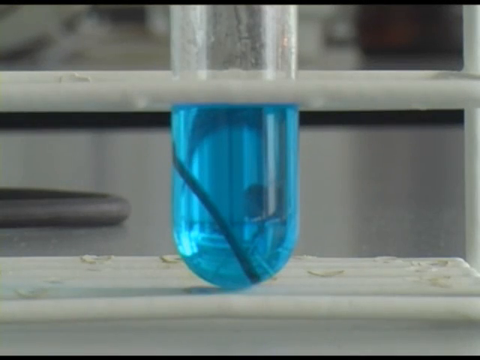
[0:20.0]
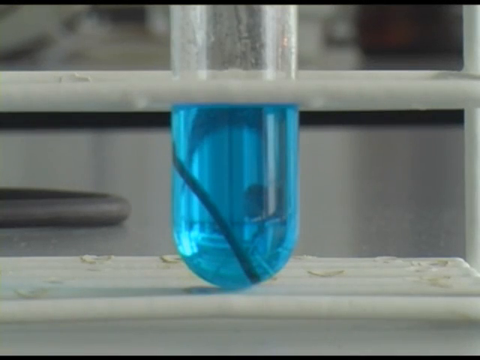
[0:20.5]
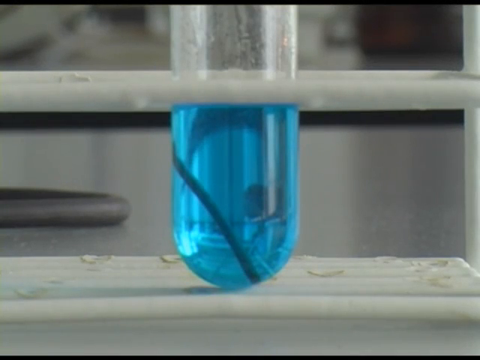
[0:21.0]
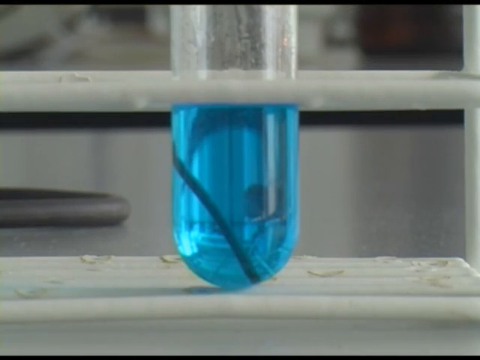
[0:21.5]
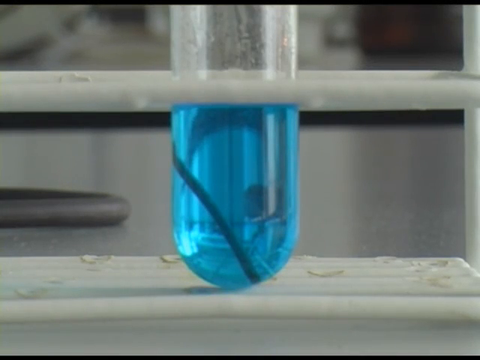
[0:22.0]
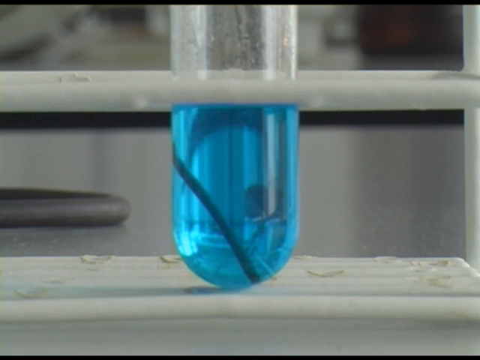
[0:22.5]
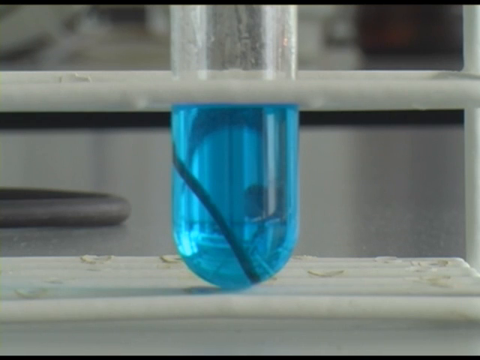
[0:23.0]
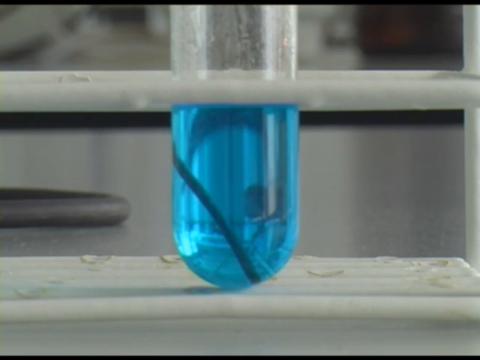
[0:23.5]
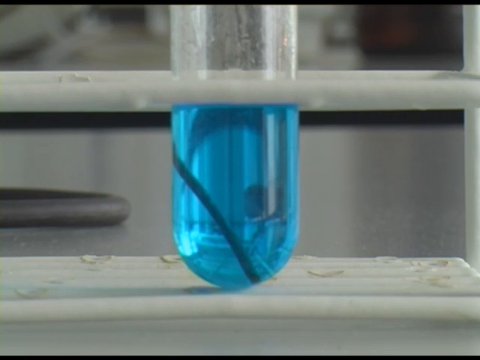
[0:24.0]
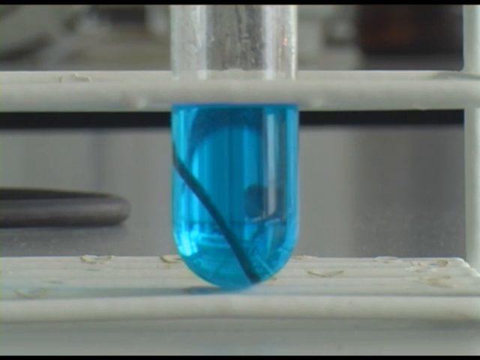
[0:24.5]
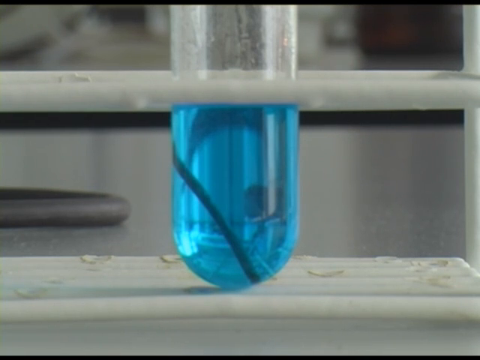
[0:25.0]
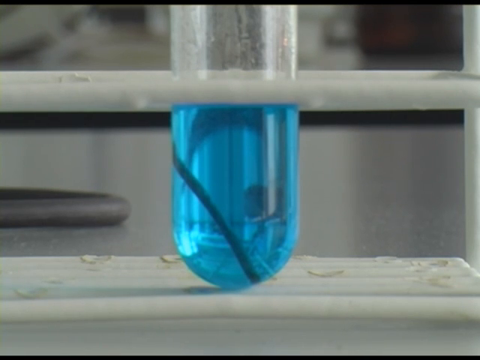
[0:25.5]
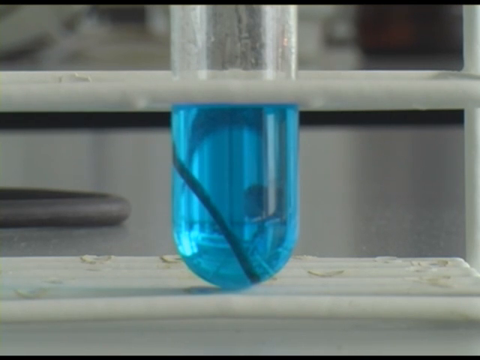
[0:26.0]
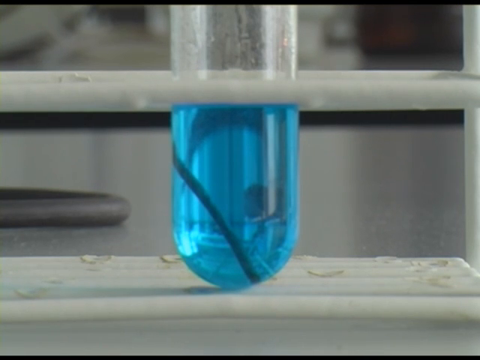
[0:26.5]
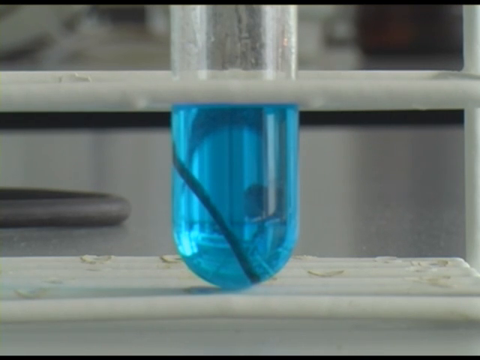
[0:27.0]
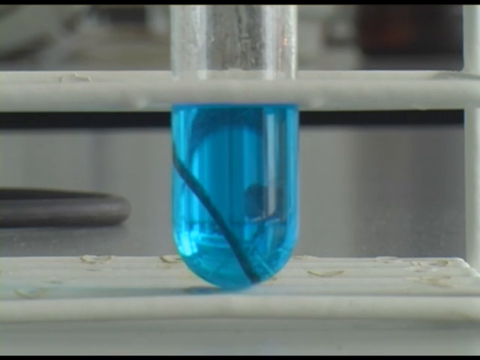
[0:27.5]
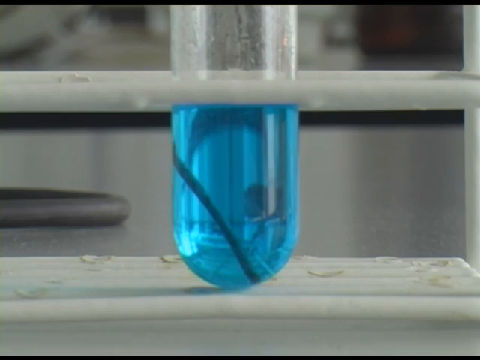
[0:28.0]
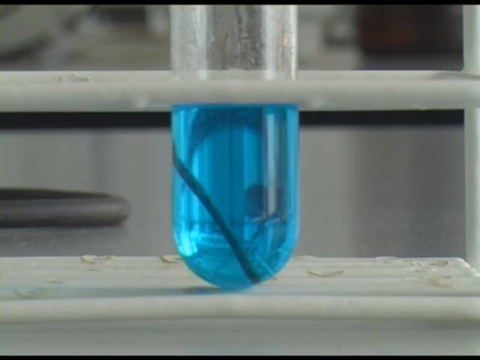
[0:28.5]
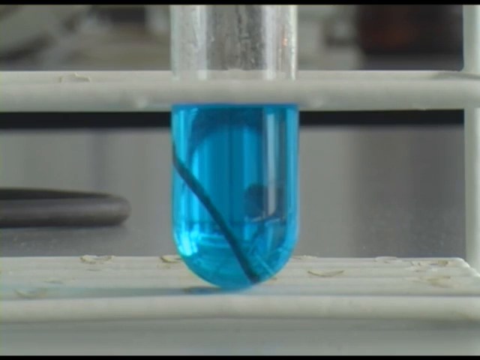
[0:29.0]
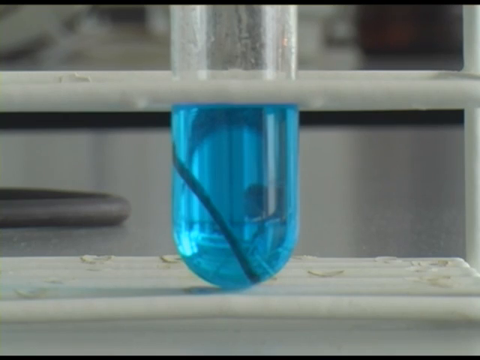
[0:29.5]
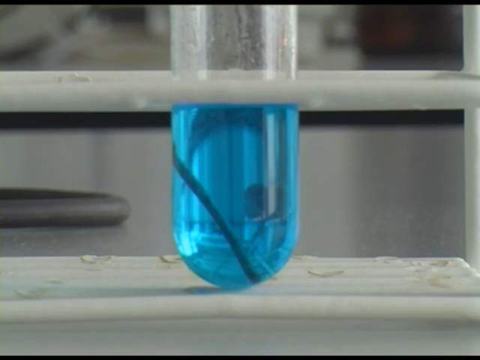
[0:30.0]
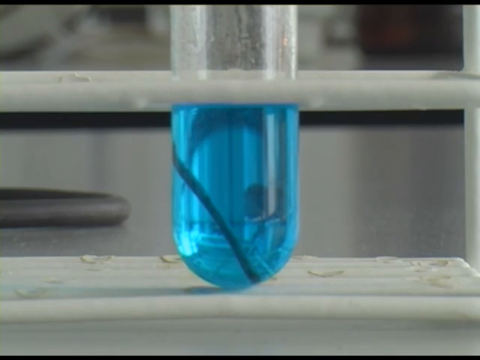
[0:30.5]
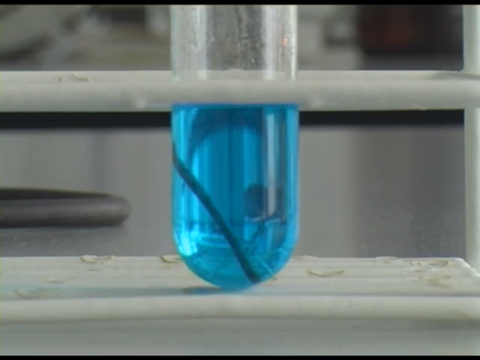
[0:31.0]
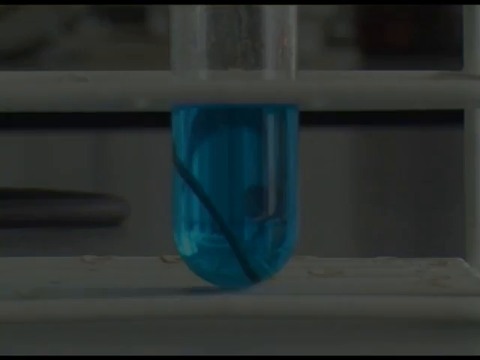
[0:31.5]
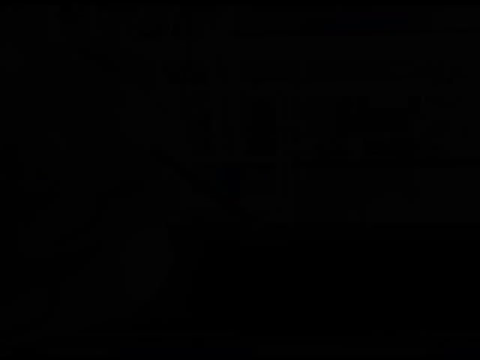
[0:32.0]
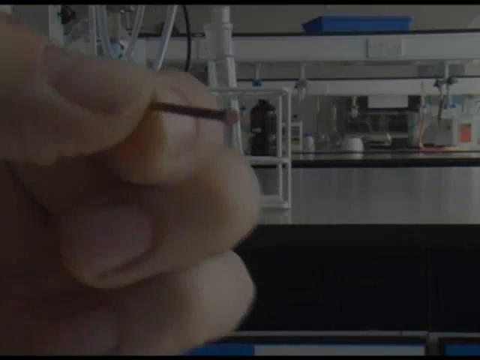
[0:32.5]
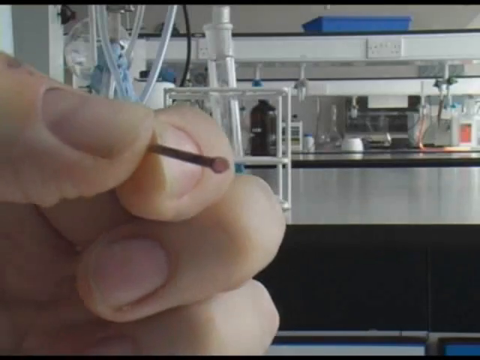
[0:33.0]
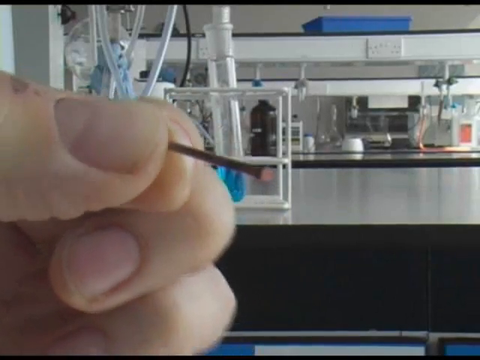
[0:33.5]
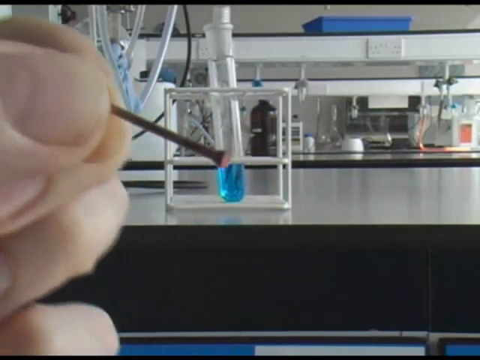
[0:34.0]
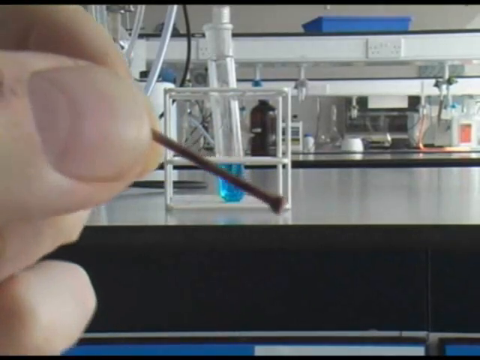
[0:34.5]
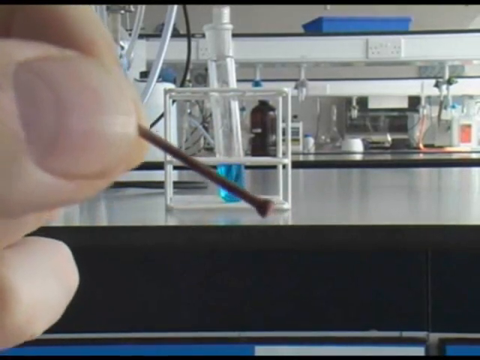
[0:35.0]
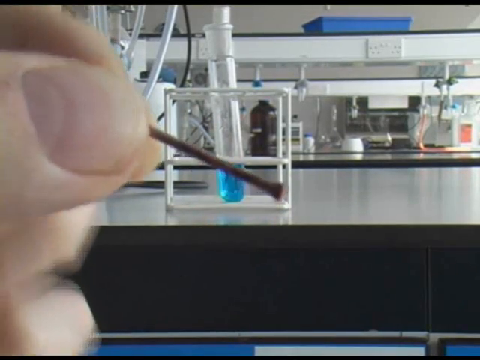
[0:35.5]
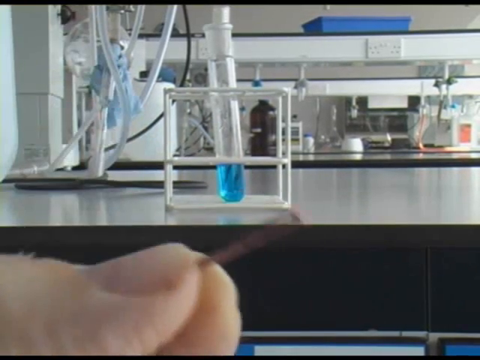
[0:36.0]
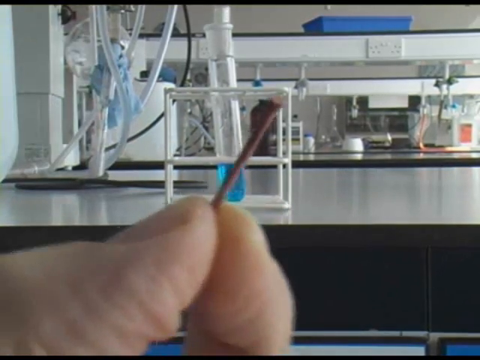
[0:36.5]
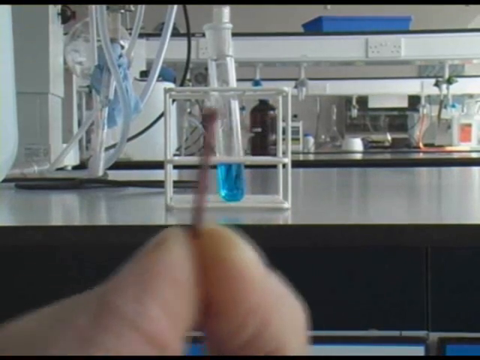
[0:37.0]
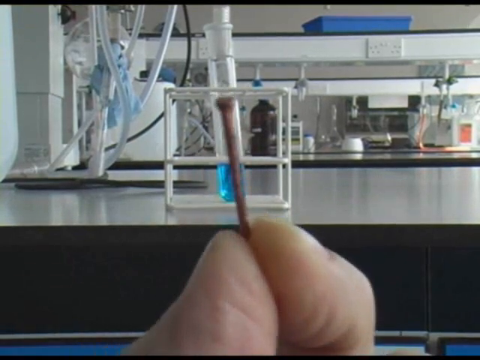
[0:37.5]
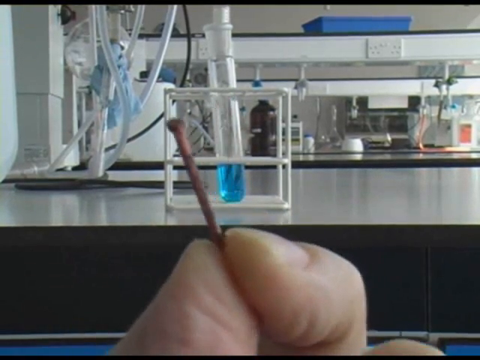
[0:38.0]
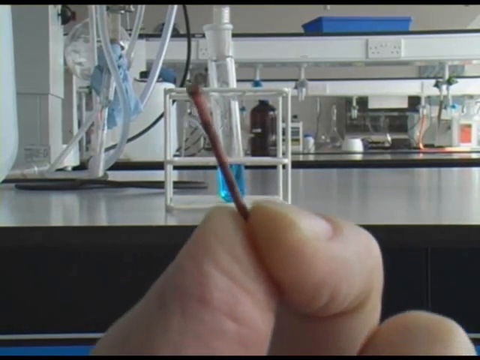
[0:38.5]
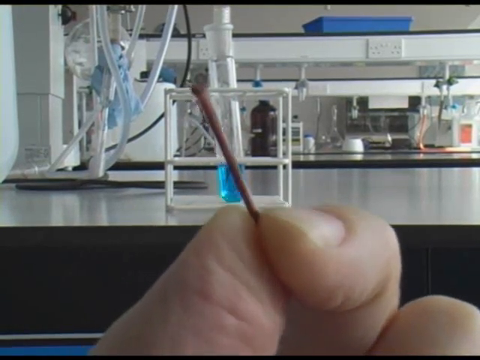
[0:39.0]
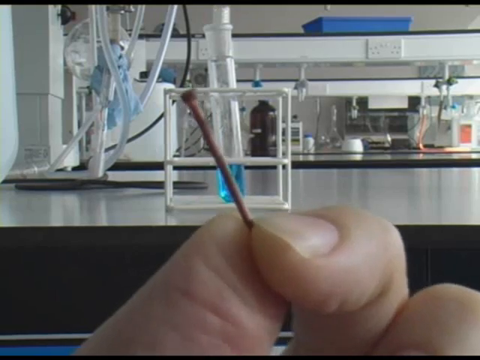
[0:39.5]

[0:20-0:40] A close-up shows the cylinder bottle with blue liquid in its bottom part. The slide then switches to the person holding the nail; only a close-up of their hand is visible as they show the nail from all different sides. A wider view of the room follows, showing different shelves, containers and tubing around the room, as the person continues to show the nail up close. They move it around on the pads of their fingers, showing all of its sides and angles.